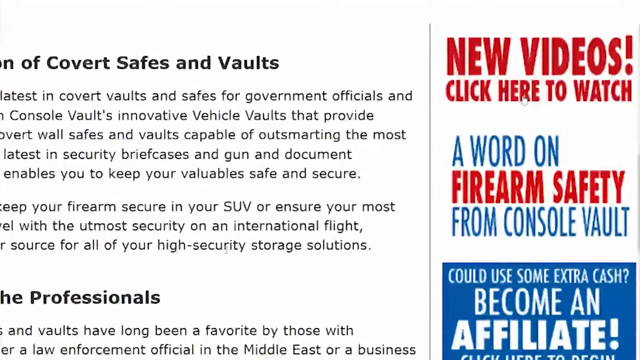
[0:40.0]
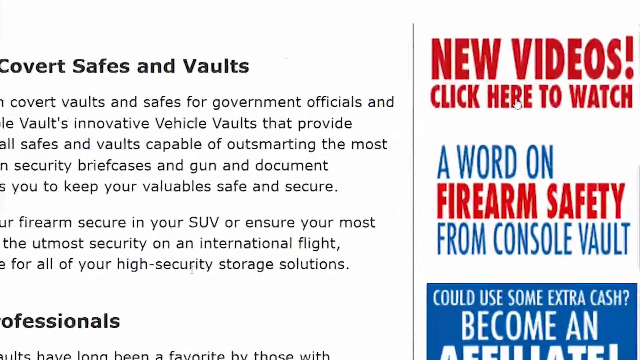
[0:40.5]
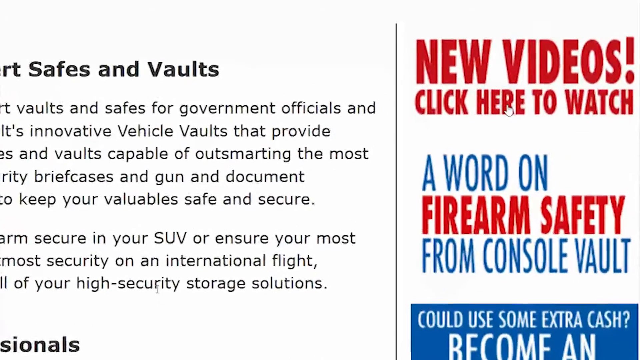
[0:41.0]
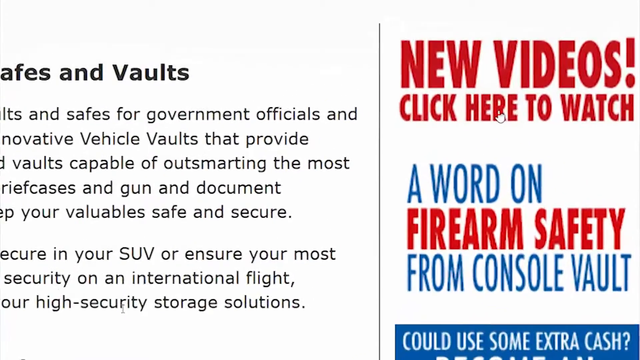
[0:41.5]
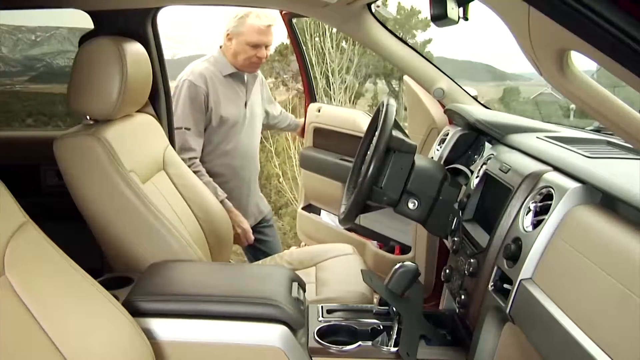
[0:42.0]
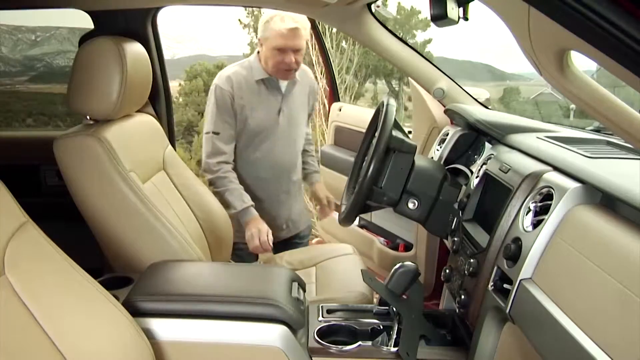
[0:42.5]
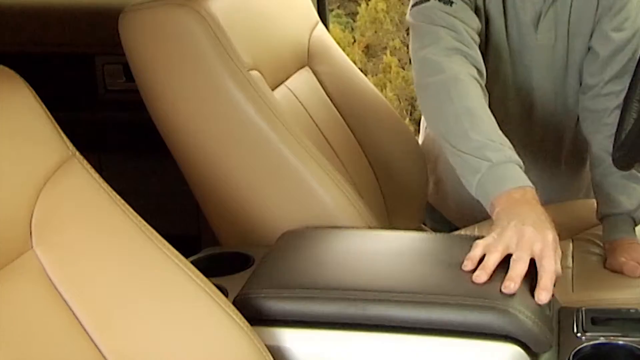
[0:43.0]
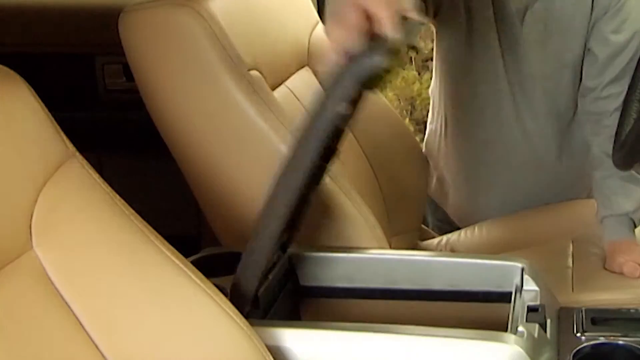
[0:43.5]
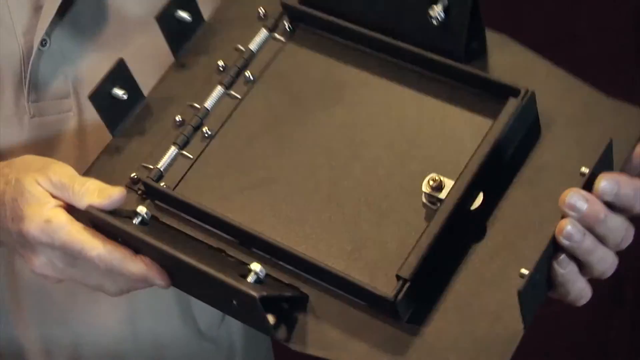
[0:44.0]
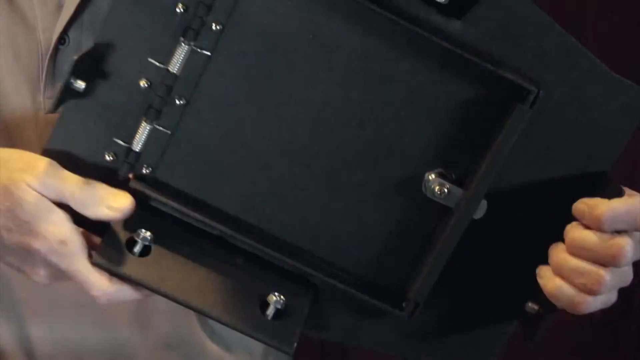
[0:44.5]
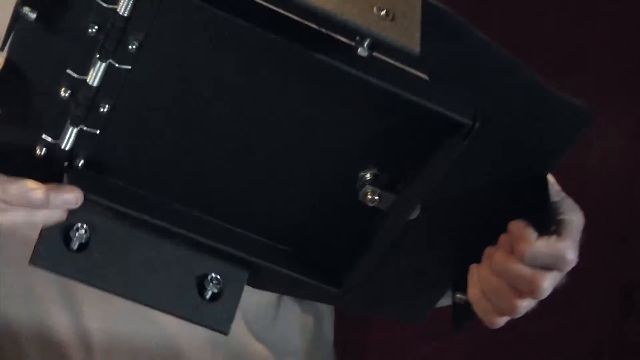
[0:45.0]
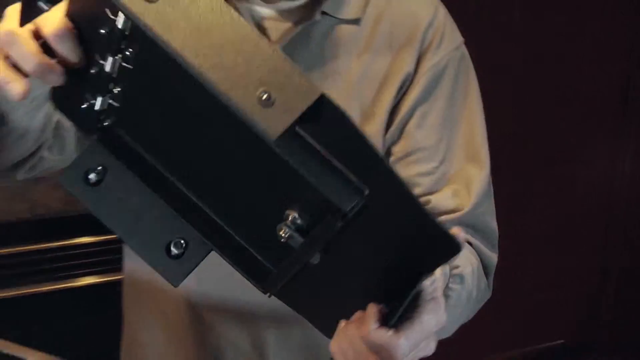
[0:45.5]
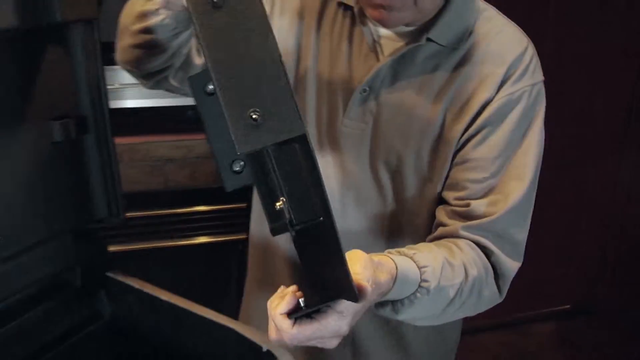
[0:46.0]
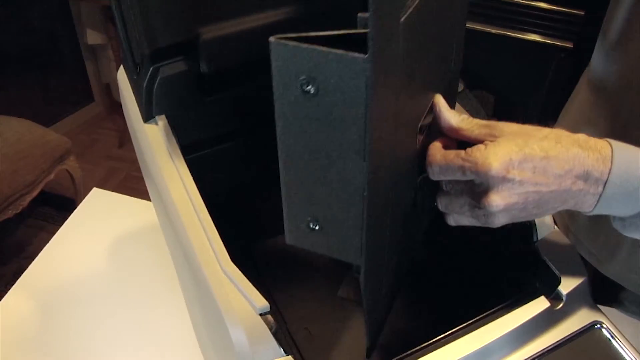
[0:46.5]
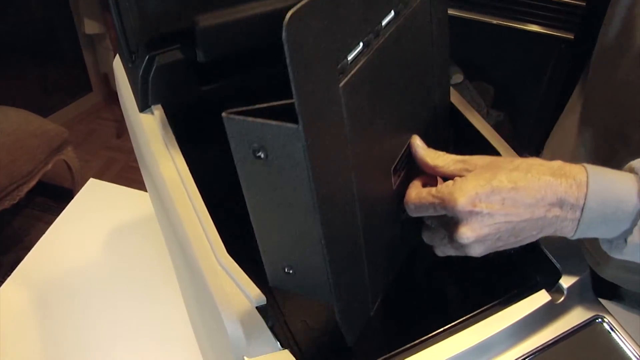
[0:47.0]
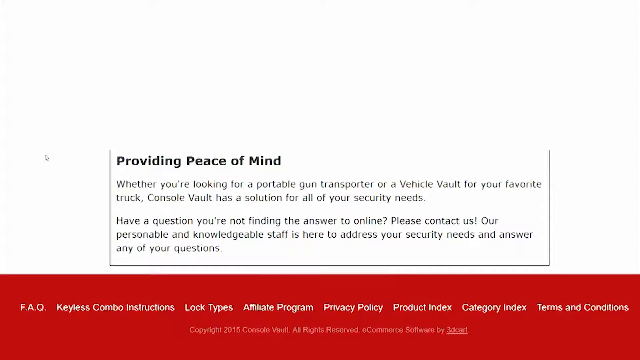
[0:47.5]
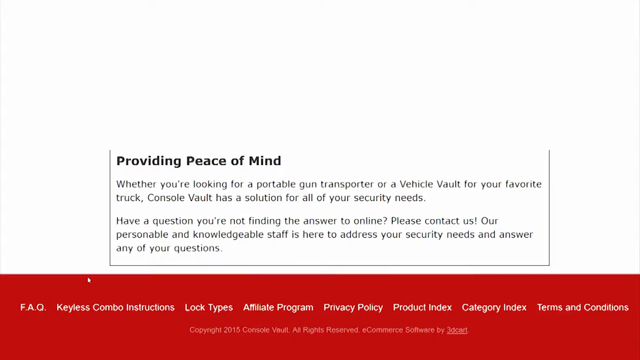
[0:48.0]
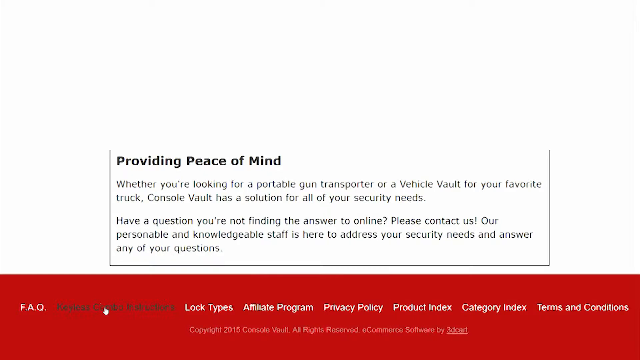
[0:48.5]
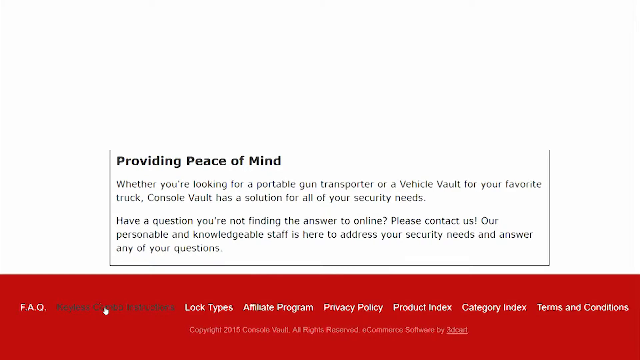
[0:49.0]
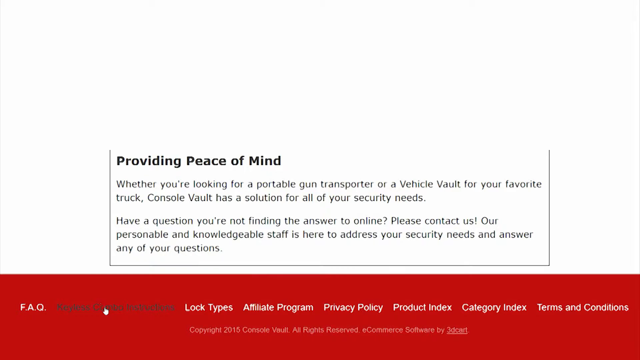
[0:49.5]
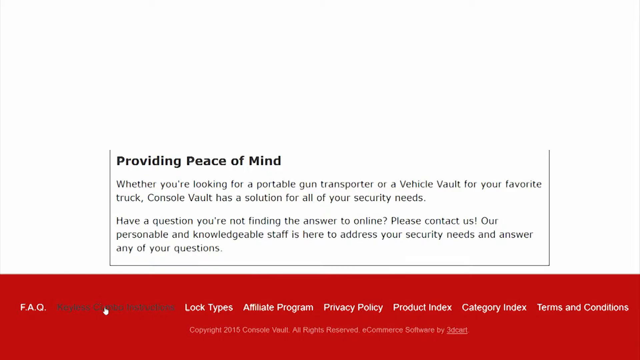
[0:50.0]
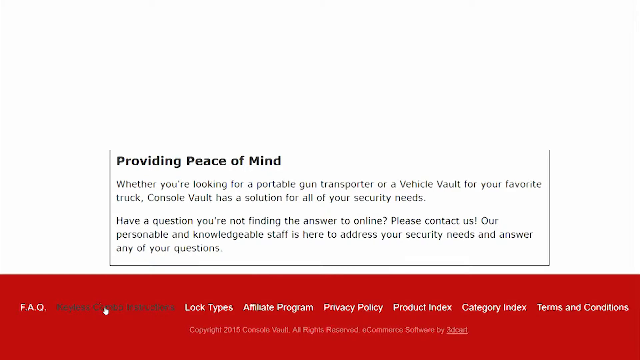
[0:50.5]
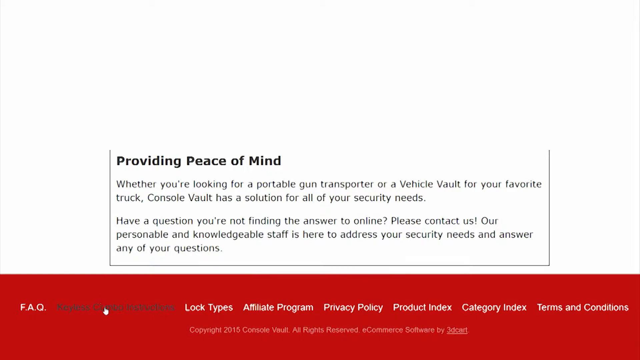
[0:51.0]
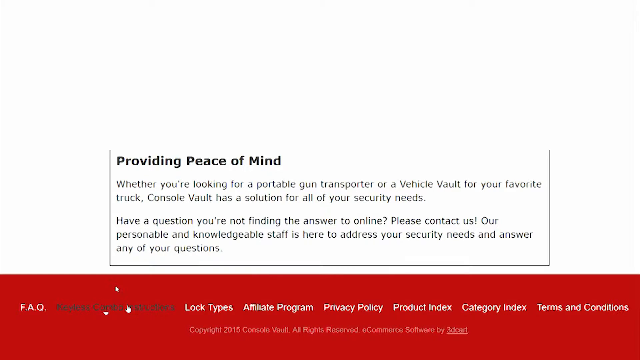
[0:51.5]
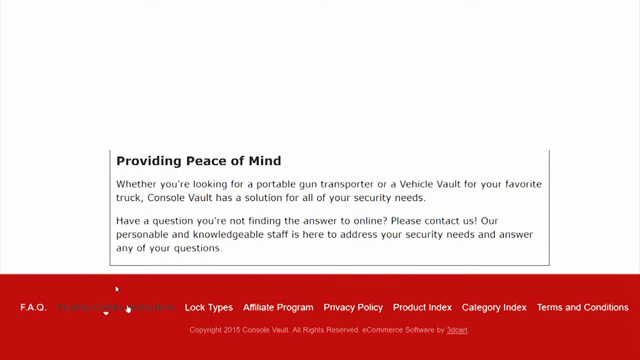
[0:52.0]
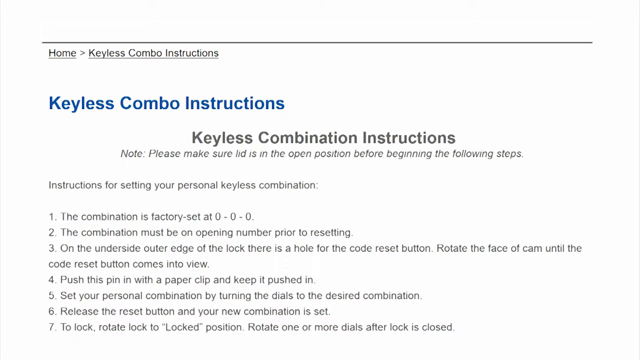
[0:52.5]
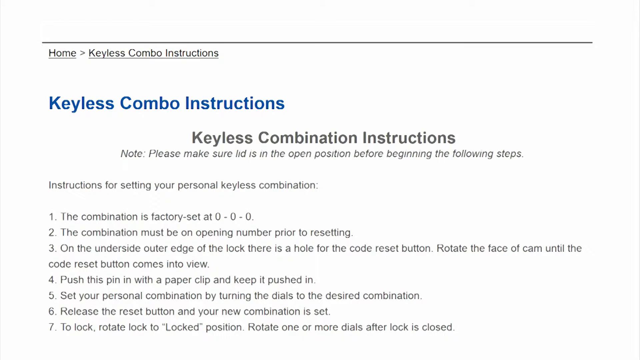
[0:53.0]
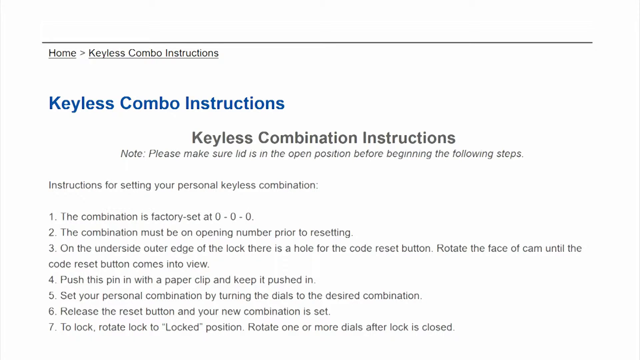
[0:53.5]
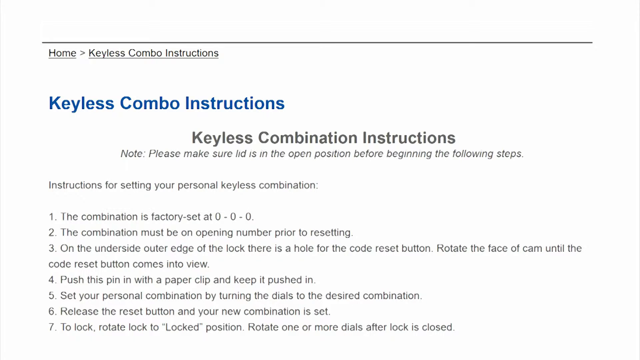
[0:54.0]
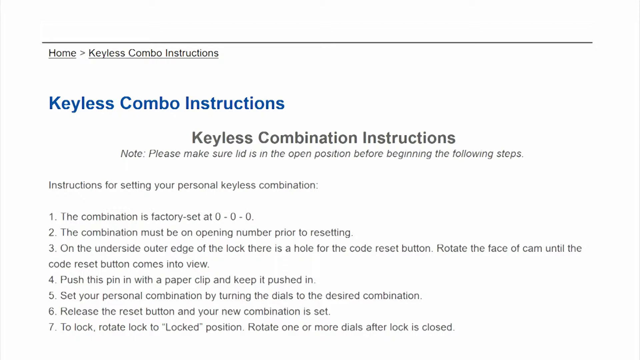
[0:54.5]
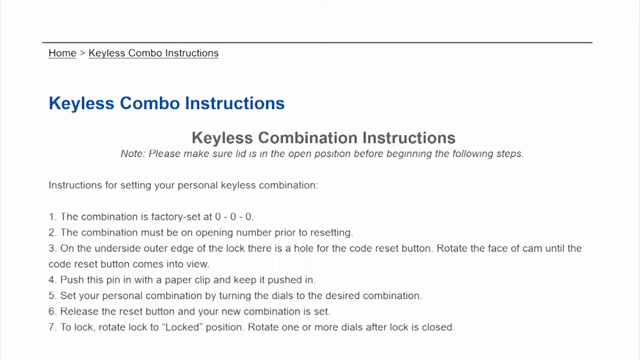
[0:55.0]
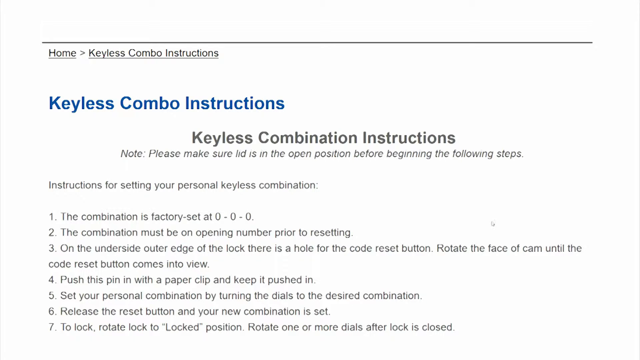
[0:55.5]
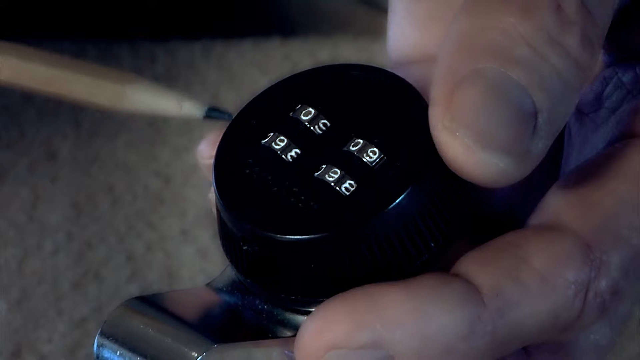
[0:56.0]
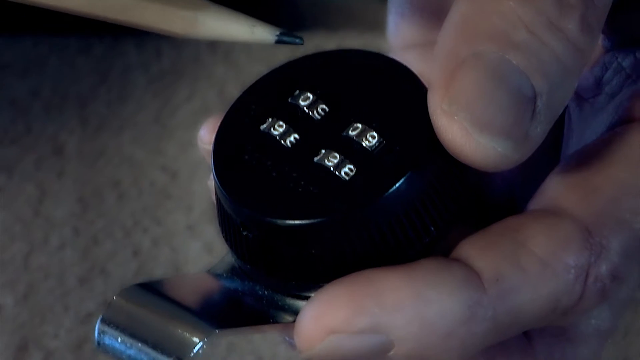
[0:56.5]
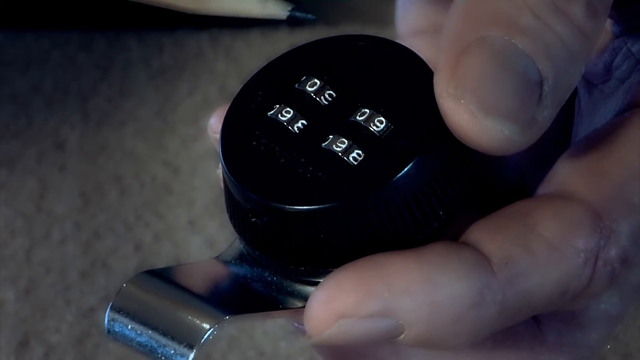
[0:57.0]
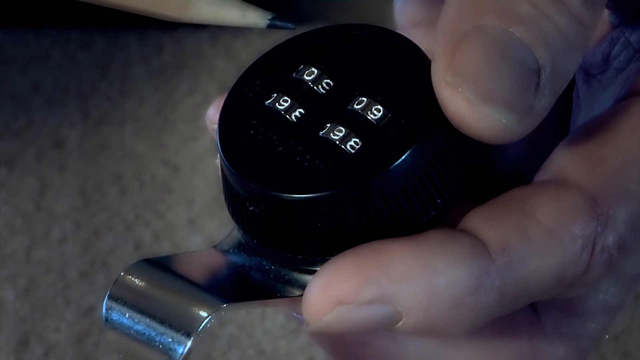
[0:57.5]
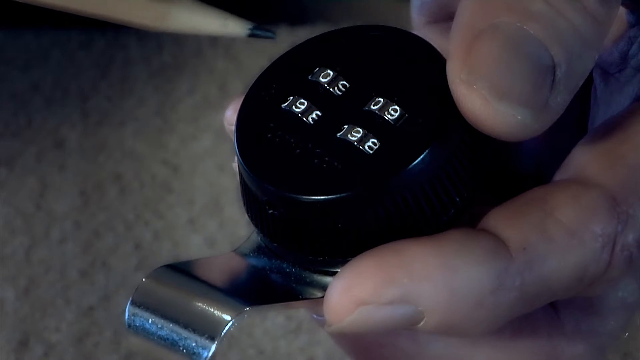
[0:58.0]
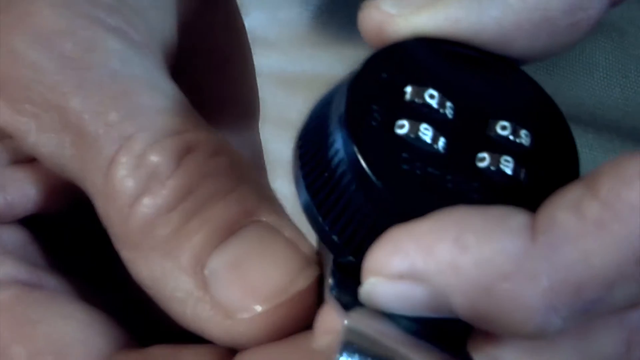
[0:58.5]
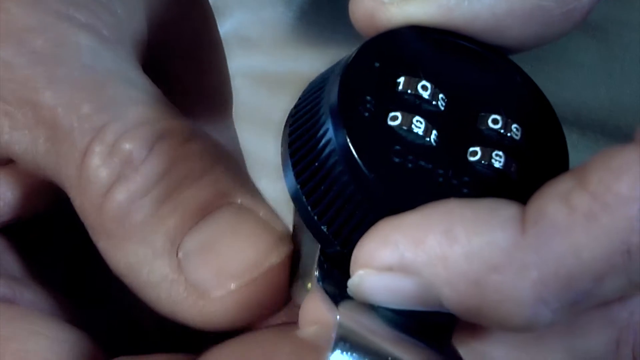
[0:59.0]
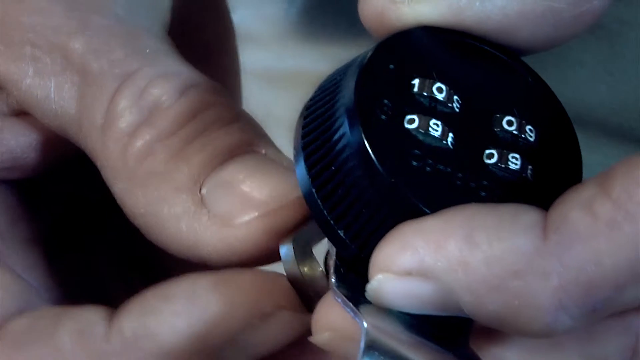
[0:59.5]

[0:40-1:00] The video transitions to a camera set up in the passenger seat of a vehicle. The door opens, and a white man wearing a grey sweater gets into the car and opens the center console, where a console vault is installed. Next, the center console is shown removed from the car, and the same man is installing it on a table; the vault is slid into the center console. The screen transitions back to the website, where a text box shows "providing peace of mind" and a disclaimer about finding the best fit for the product and contacting the company with any questions. A white background with text then appears, titled "Keyless Combination Instructions," with instructions for setting a personal keyless combination on the factory lock. The screen then transitions to a zoomed-in video of the console vault's combination lock held by someone's fingers; a pencil points to certain parts of the lock while the fingers of another hand manipulate it.